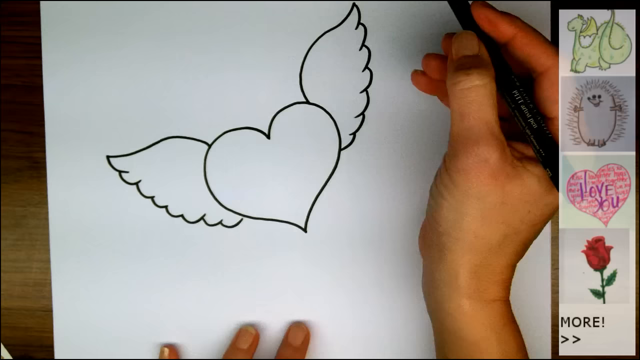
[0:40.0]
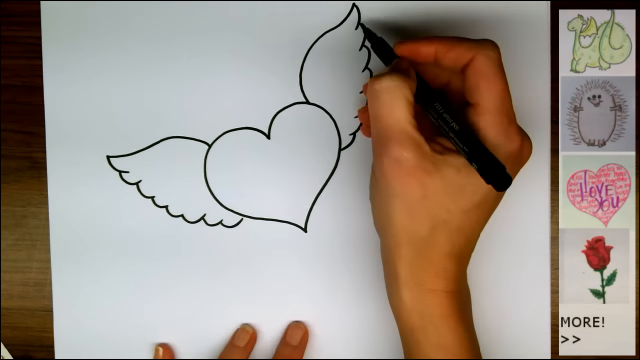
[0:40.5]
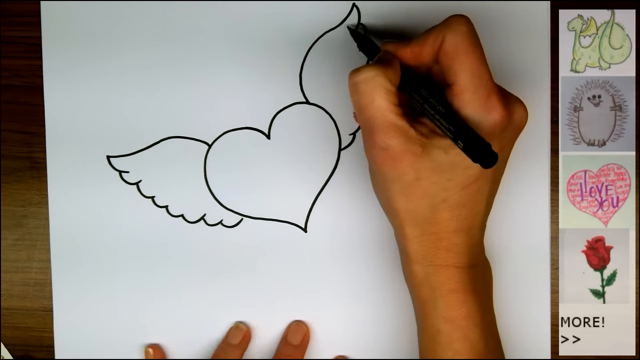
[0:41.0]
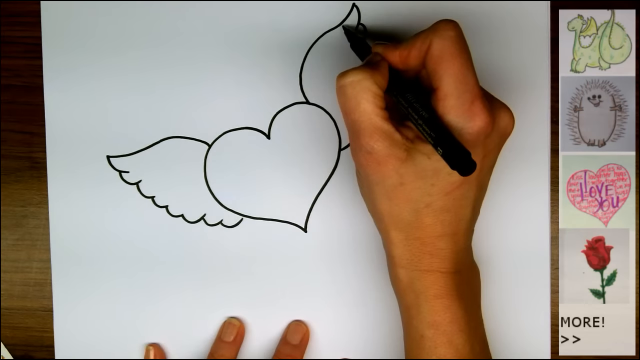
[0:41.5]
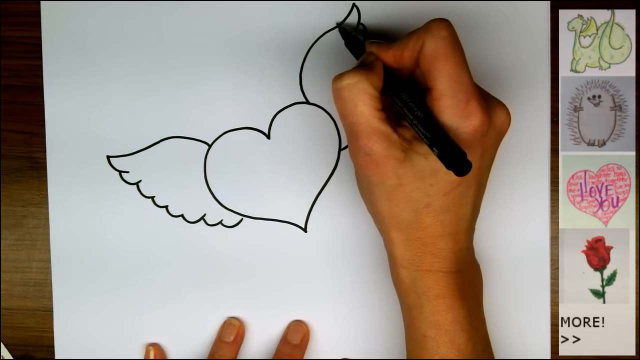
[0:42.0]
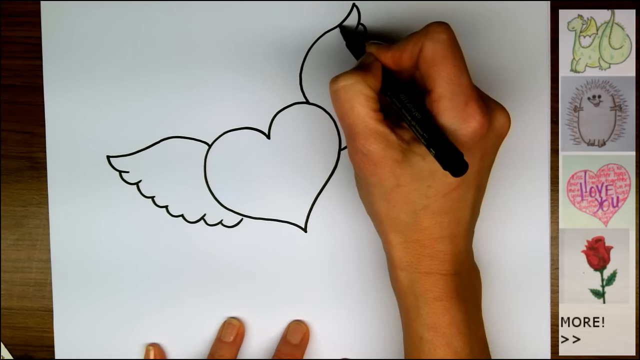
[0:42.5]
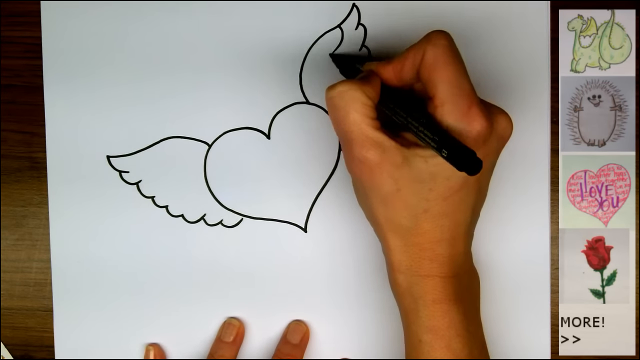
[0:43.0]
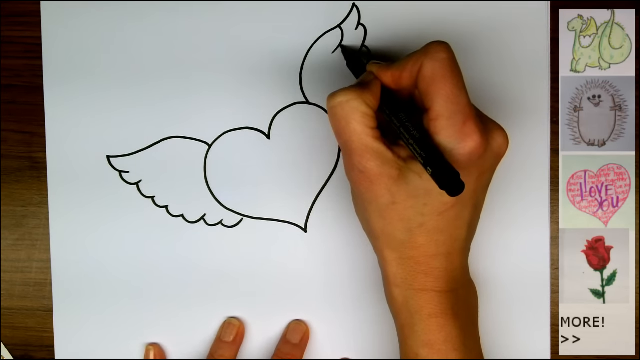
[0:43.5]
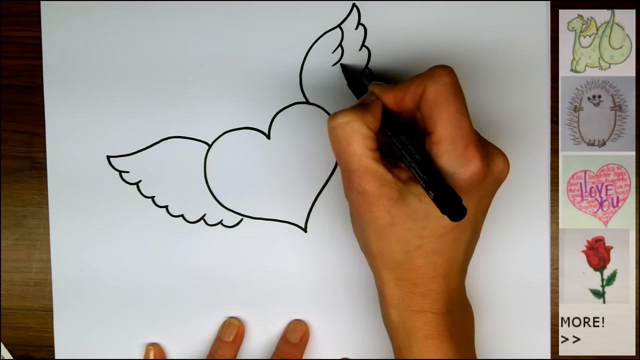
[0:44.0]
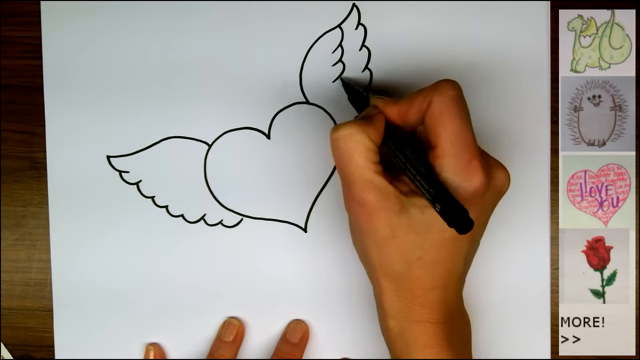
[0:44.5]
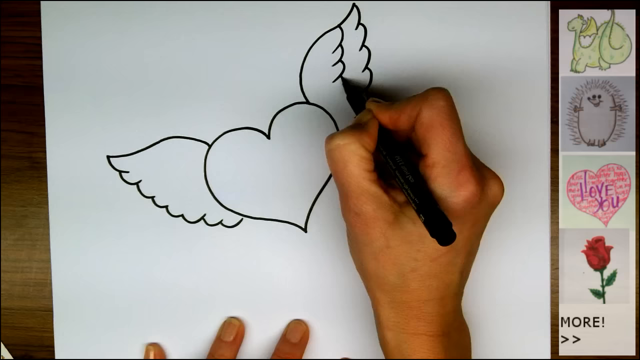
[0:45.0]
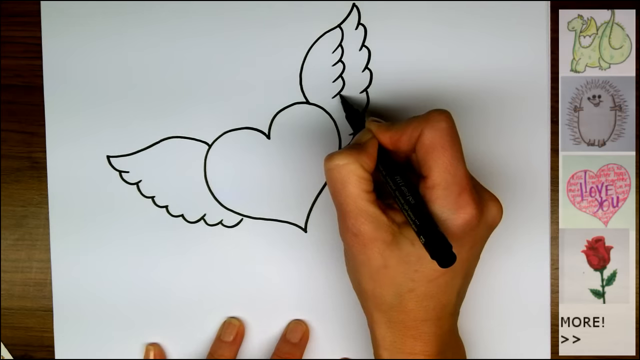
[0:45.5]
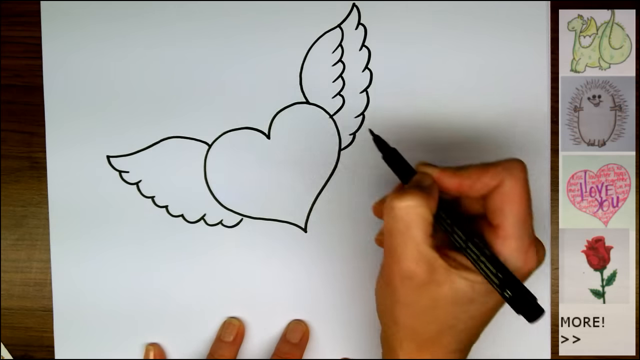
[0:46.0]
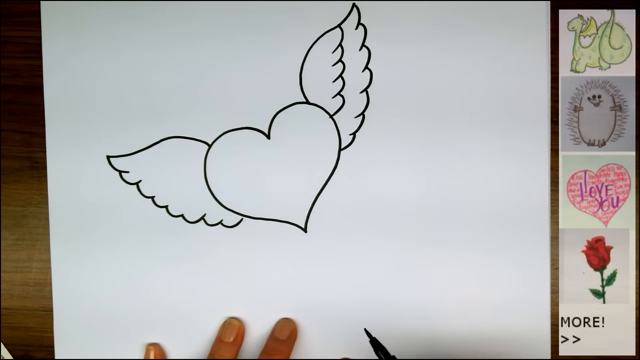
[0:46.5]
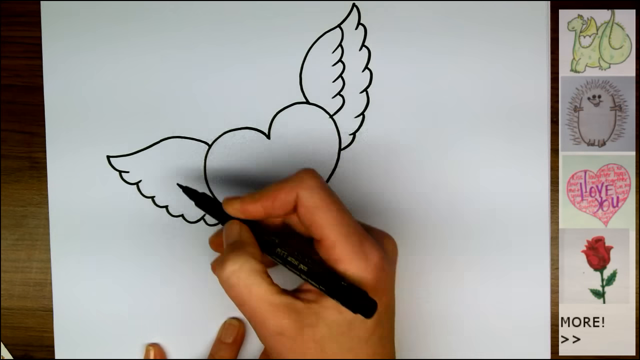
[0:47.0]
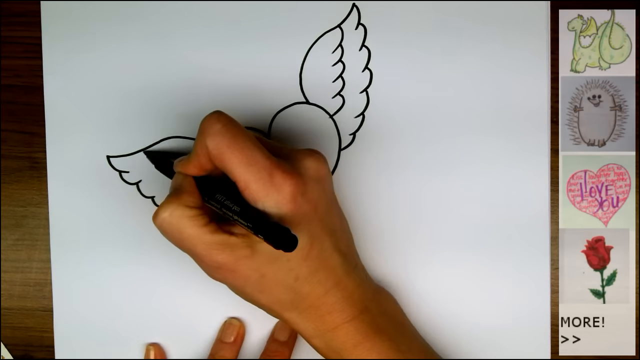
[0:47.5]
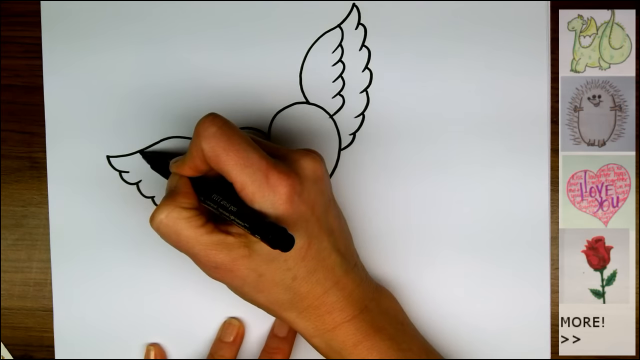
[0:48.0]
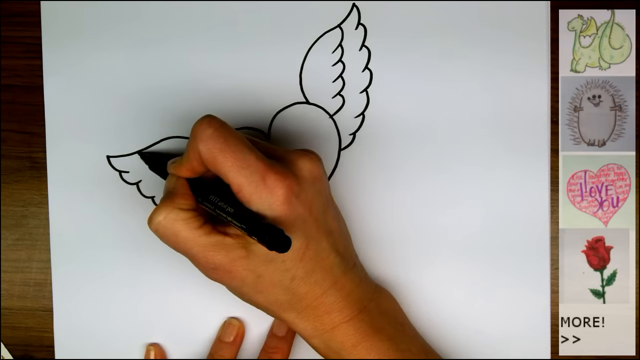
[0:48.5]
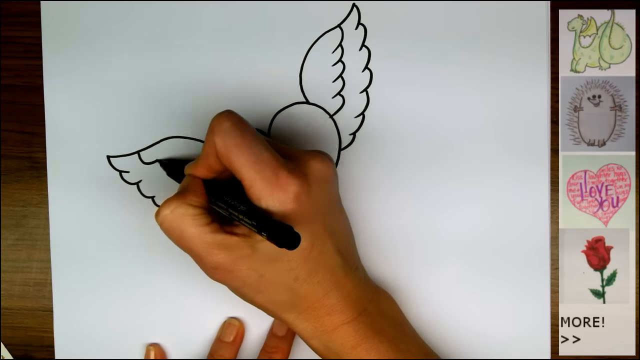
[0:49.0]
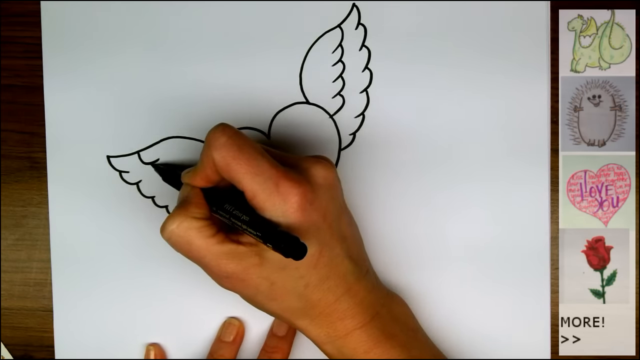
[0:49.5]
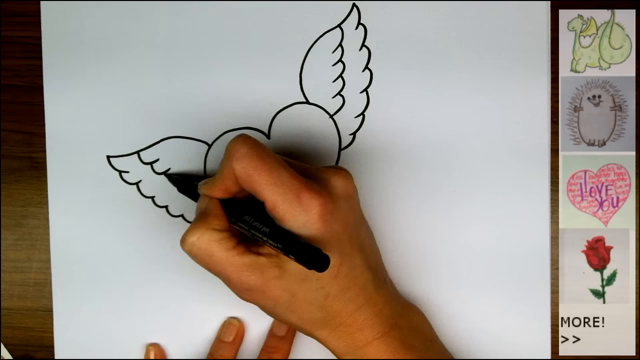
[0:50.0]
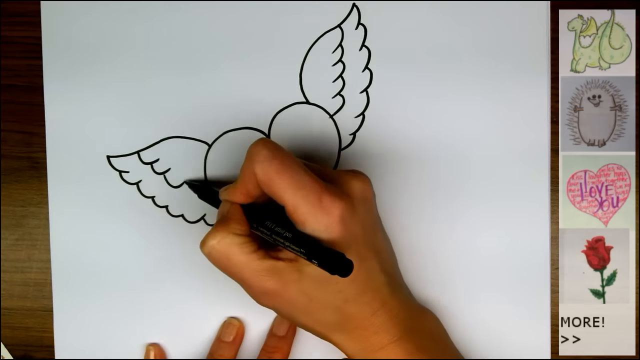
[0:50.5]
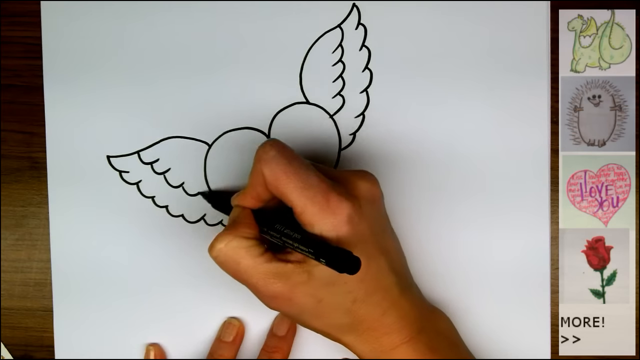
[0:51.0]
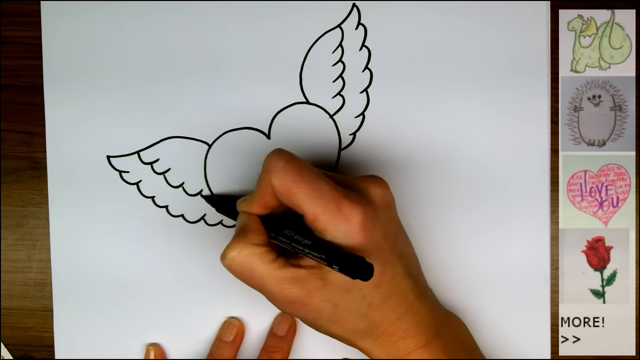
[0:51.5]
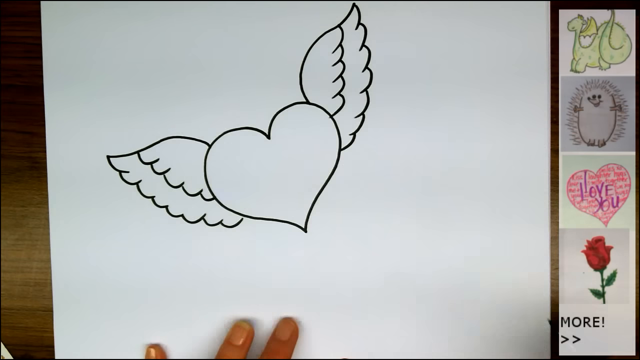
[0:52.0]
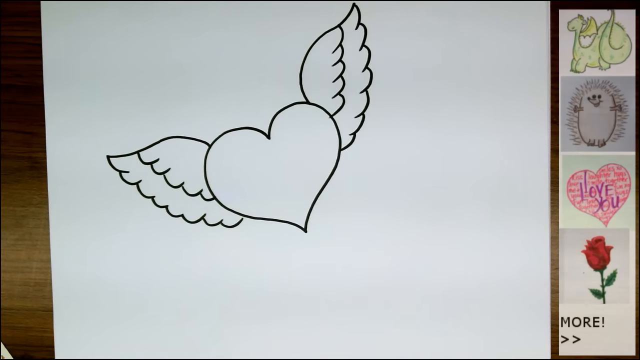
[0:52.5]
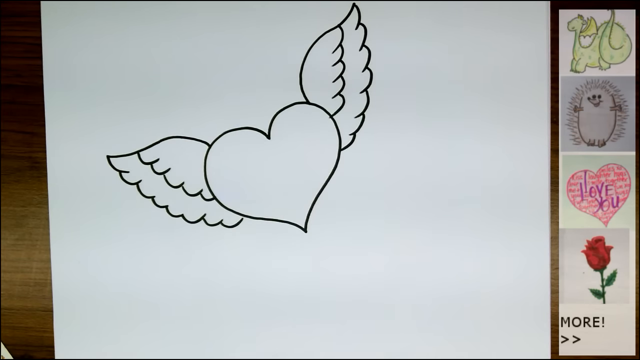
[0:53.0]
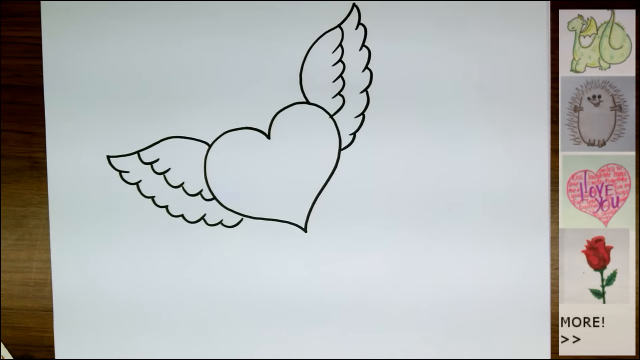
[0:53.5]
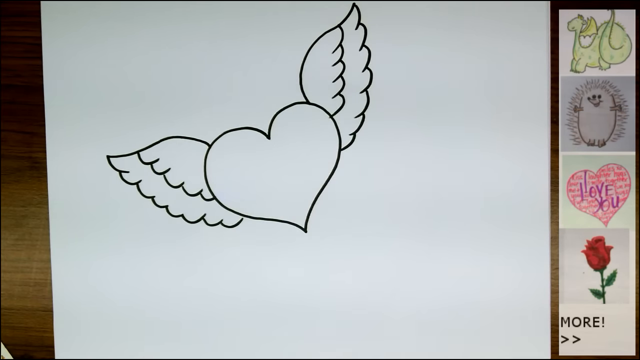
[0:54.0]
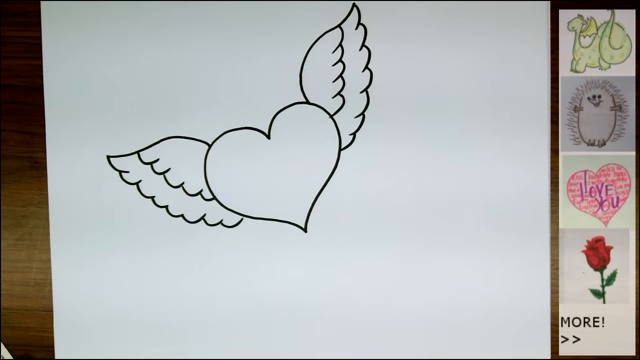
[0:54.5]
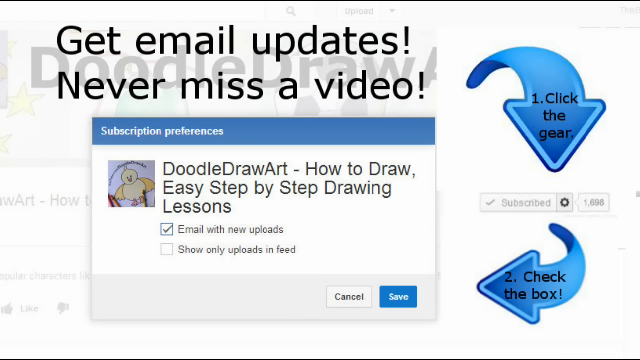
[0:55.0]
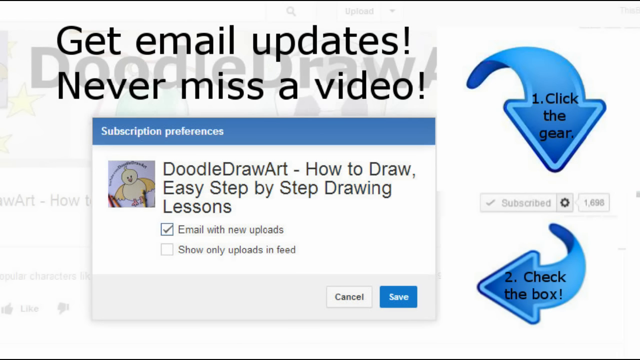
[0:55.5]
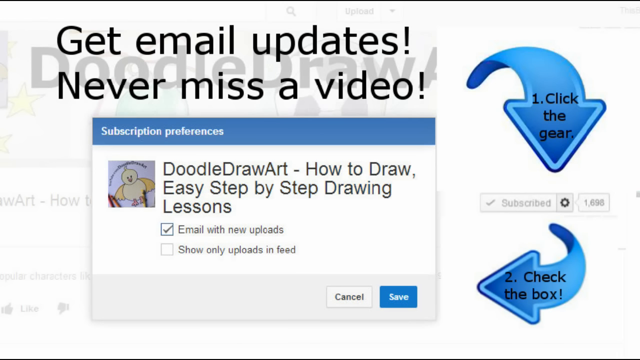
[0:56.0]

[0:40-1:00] The time-lapse of the person drawing the heart with wings behind it continues. On the right-hand side of the screen are pictures of a green dragon, a rounded dog, a pink heart with the words 'I love you' written in purple, and a rose. The person adds final touches to the wings, in the middle and on either side of the wings. The heart with wings points diagonally to the left. Only the person's right hand is filmed, along with the marker they are using. The DIY video ends with a presentation that says 'Get Email Updates, Never Miss a Video'. Underneath the title is a post that says 'Doodle Draw Art, How to Draw, Easy Step-by-Step Drawing Lessons'. On the right-hand side of the screen are two blue arrows: the first, at the top right, points downwards and says '1. Click the gear.', and the second, at the bottom right, points to the subscription preference and says '2. check the box!'.